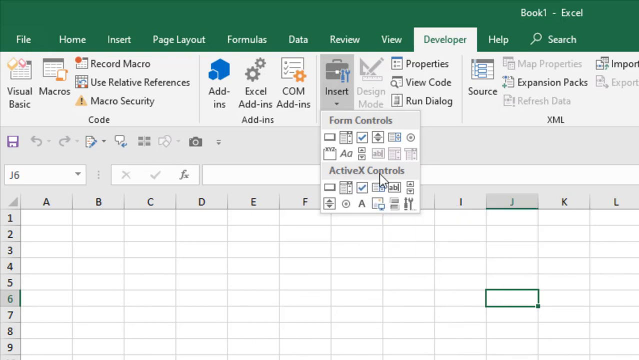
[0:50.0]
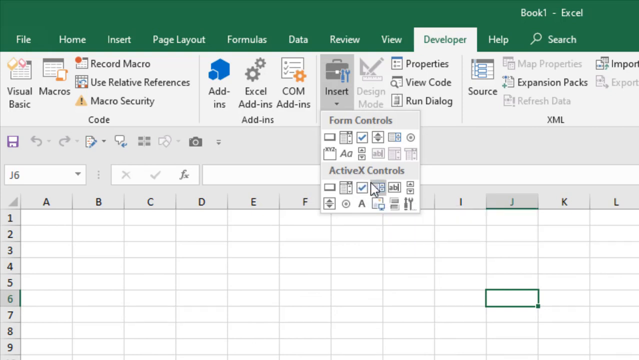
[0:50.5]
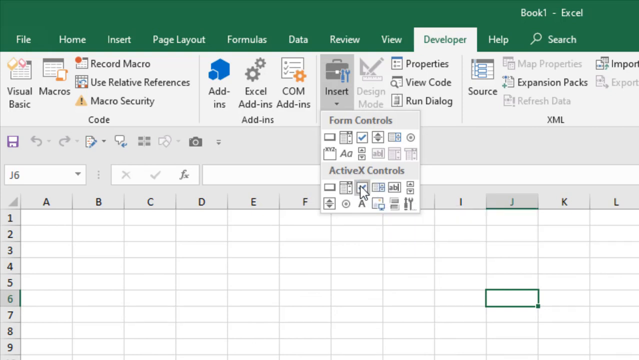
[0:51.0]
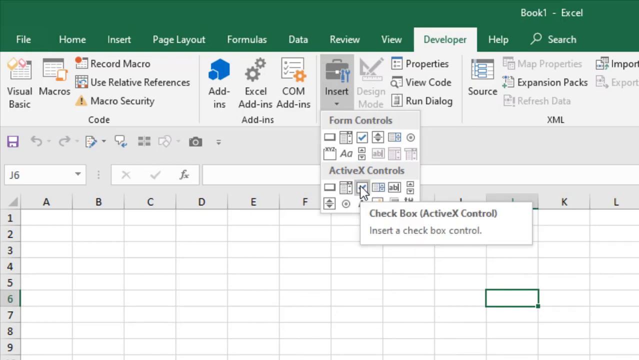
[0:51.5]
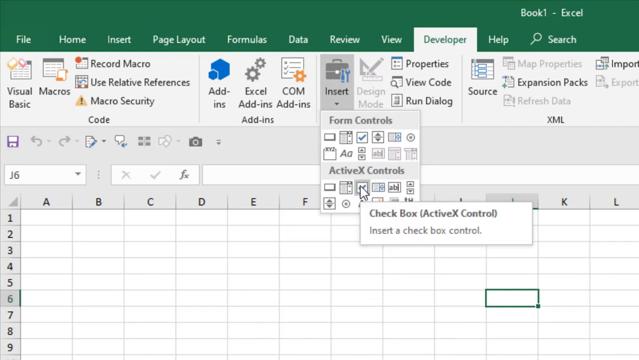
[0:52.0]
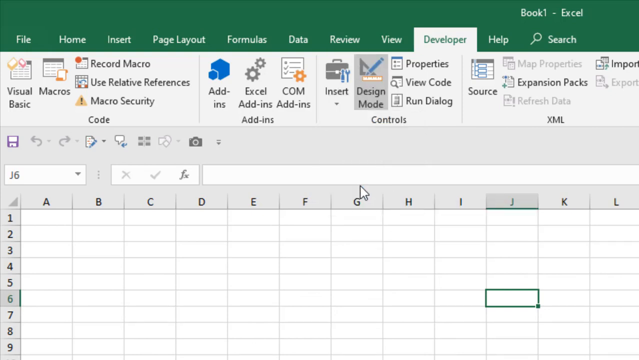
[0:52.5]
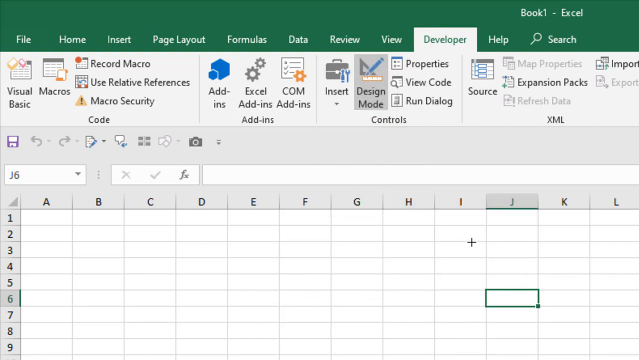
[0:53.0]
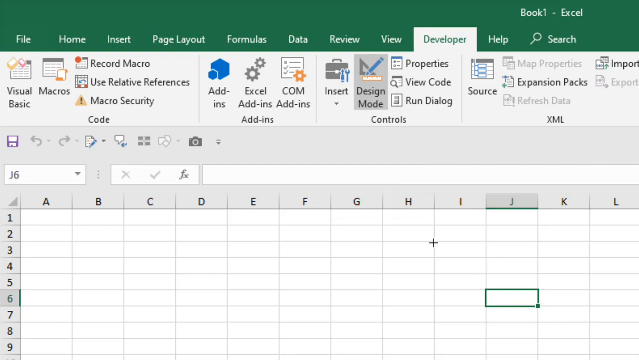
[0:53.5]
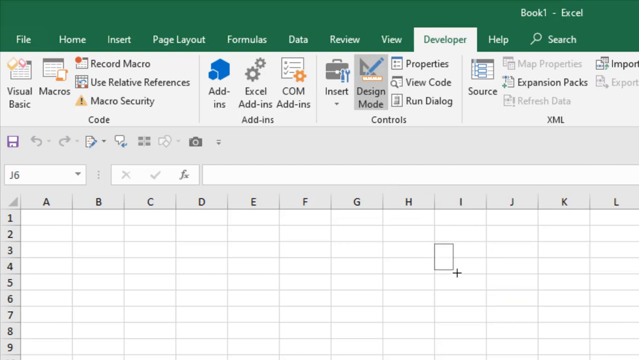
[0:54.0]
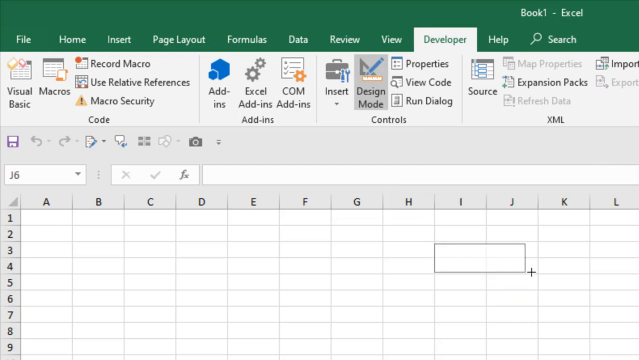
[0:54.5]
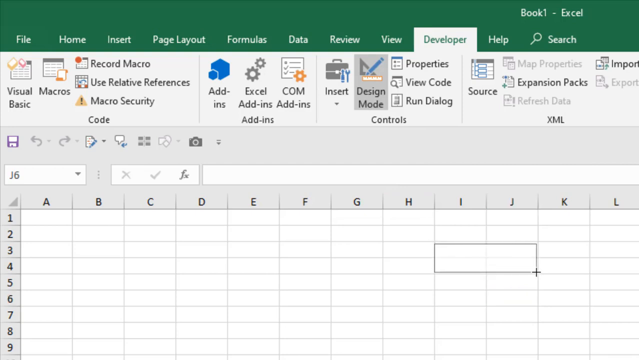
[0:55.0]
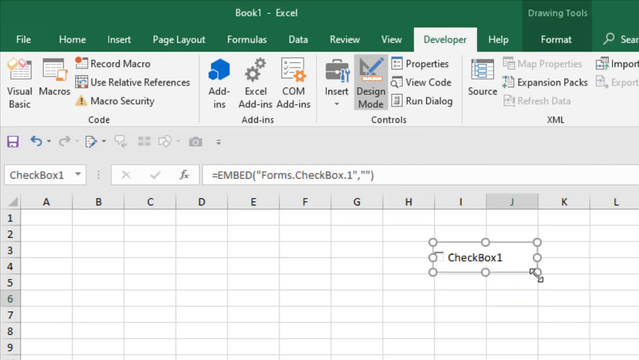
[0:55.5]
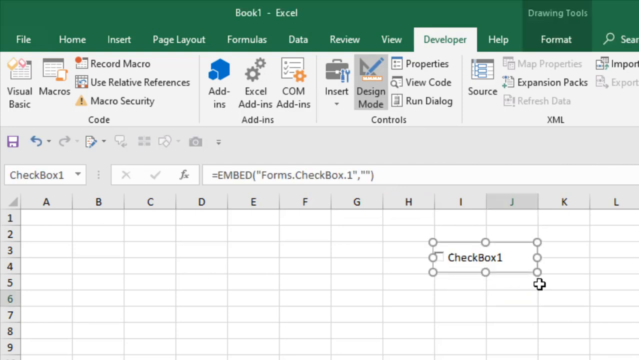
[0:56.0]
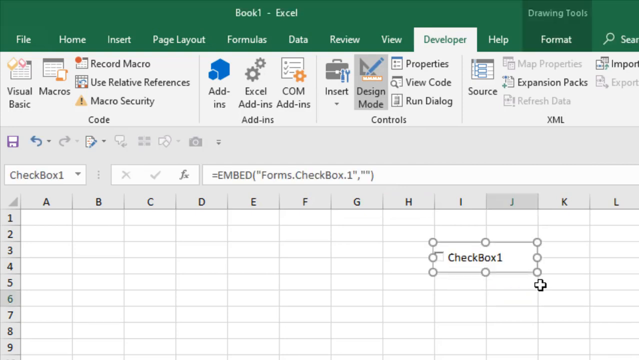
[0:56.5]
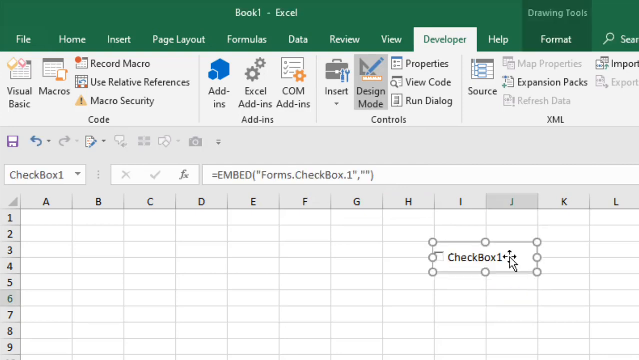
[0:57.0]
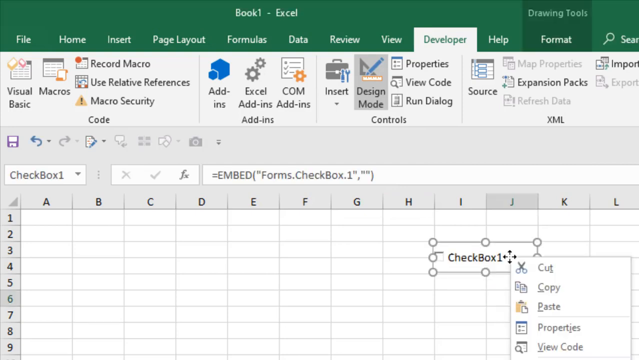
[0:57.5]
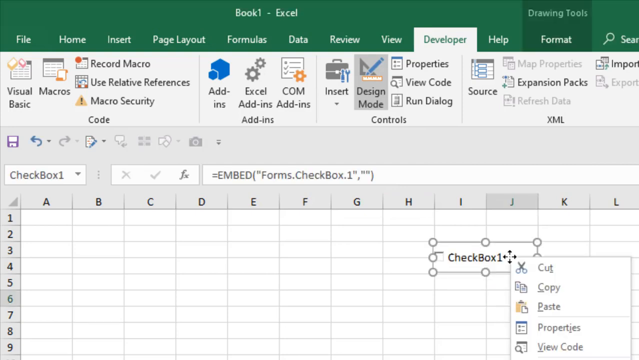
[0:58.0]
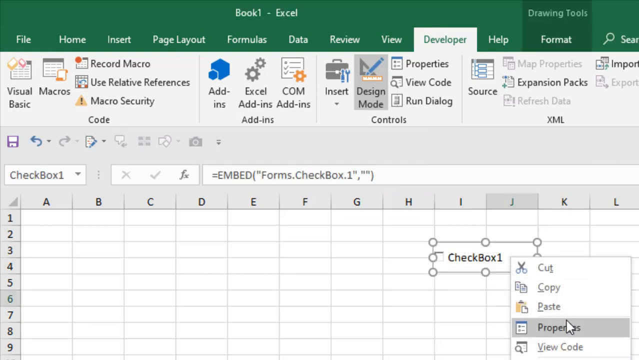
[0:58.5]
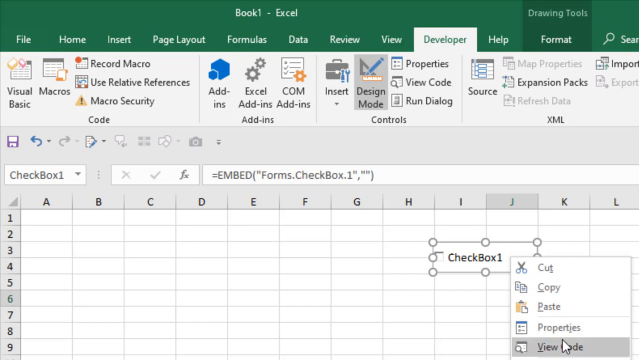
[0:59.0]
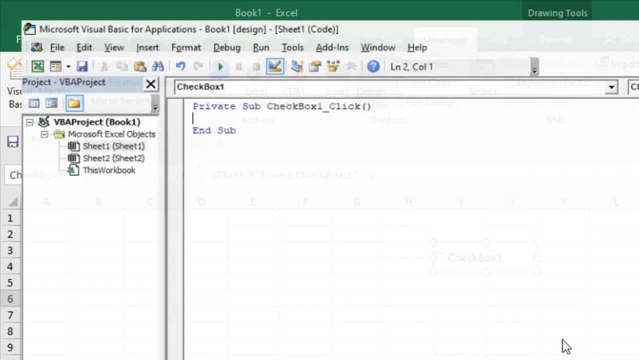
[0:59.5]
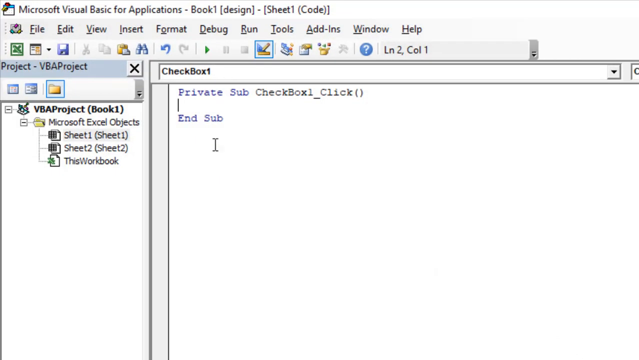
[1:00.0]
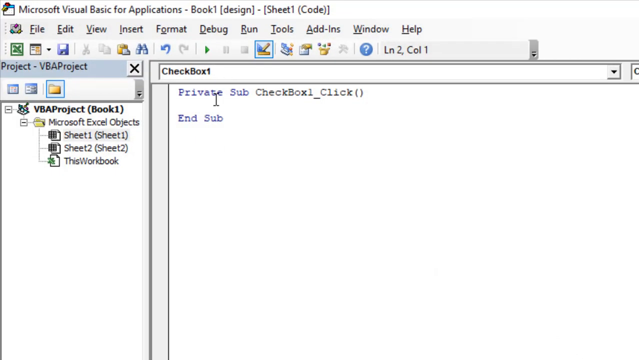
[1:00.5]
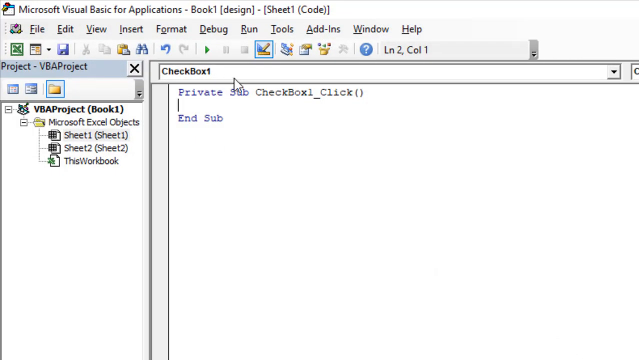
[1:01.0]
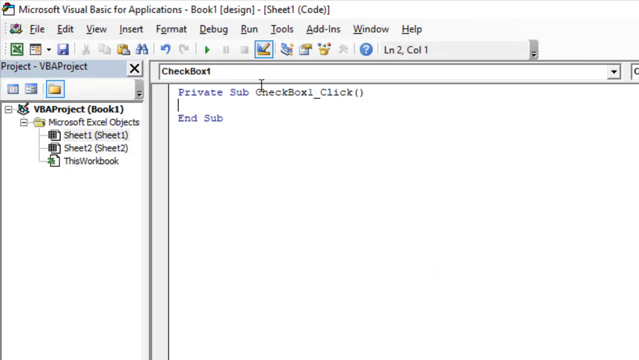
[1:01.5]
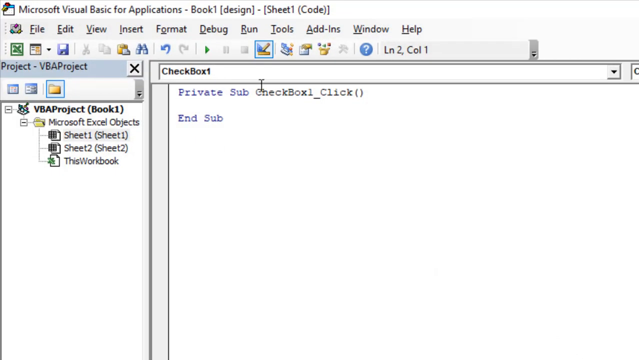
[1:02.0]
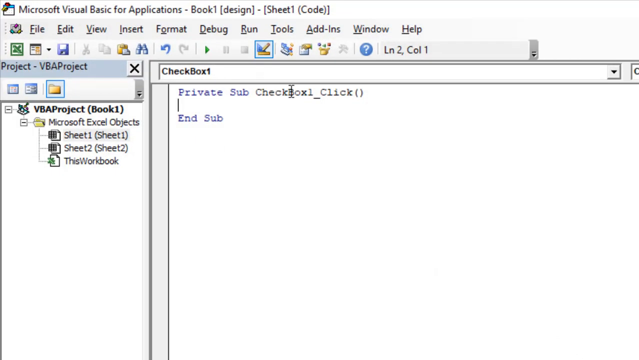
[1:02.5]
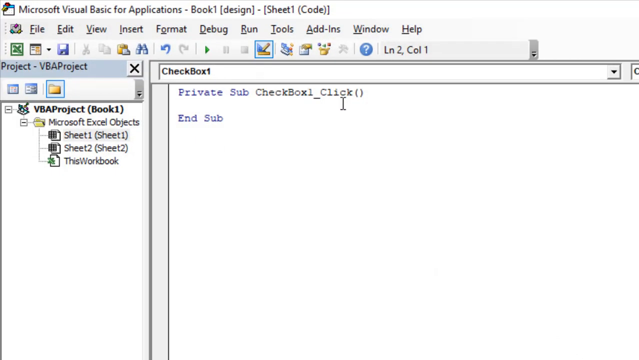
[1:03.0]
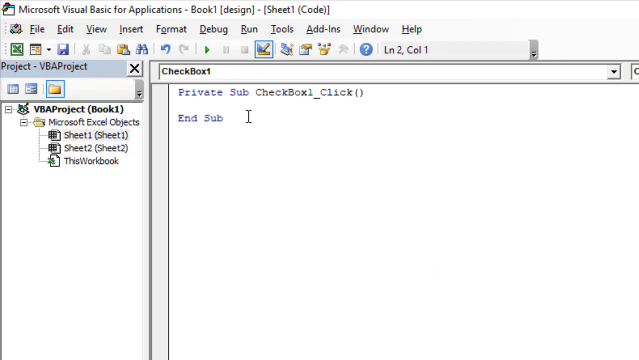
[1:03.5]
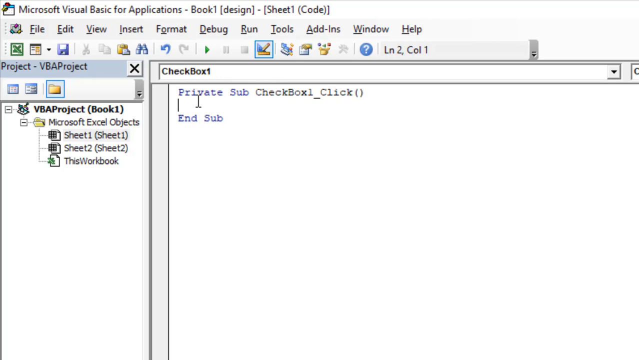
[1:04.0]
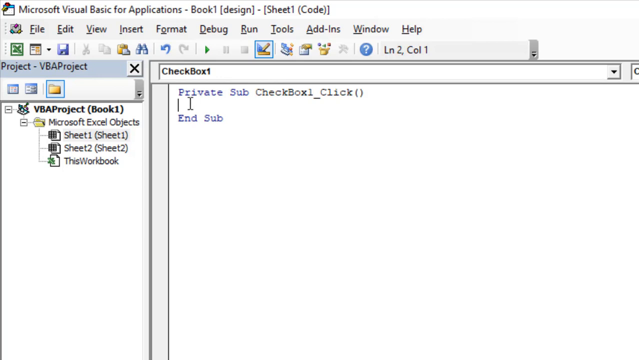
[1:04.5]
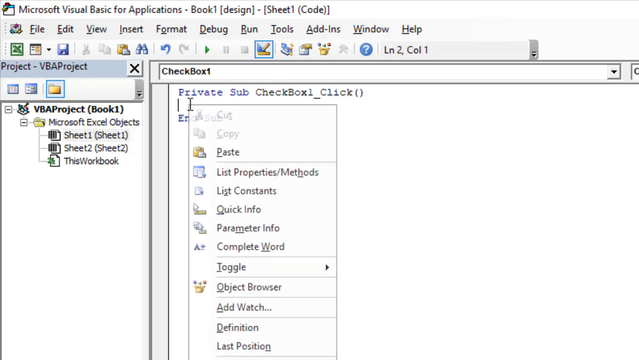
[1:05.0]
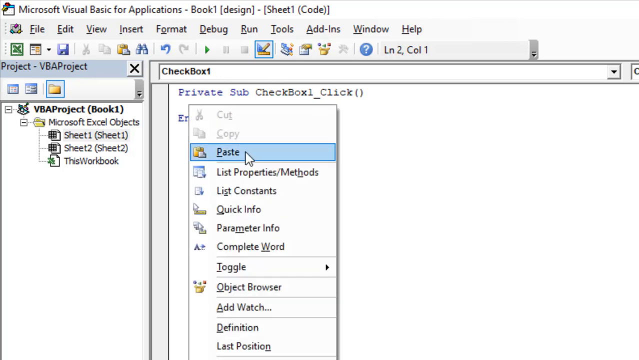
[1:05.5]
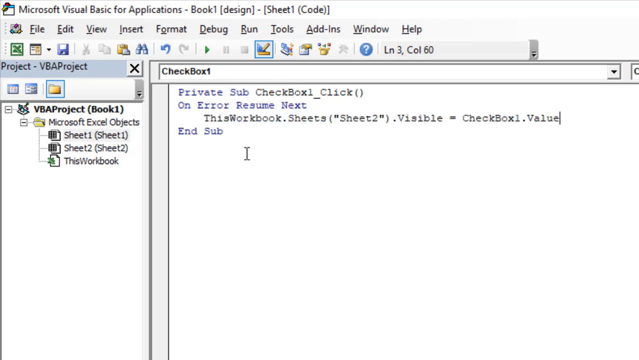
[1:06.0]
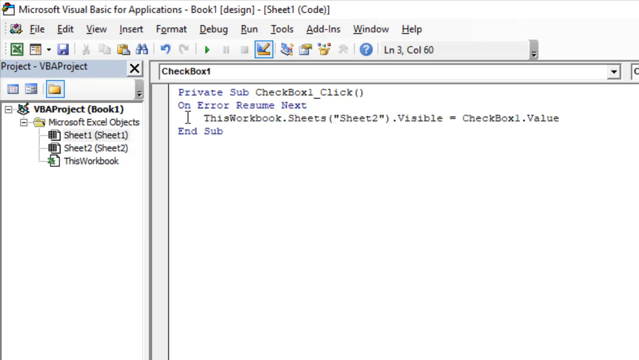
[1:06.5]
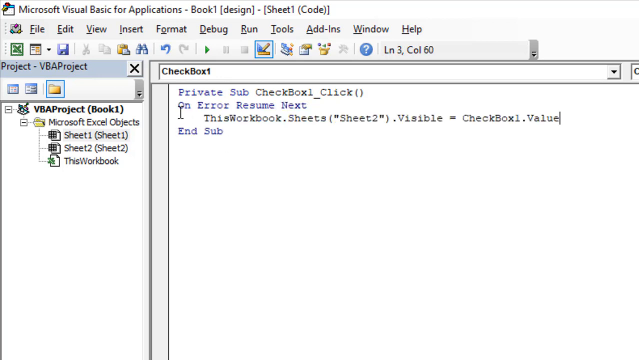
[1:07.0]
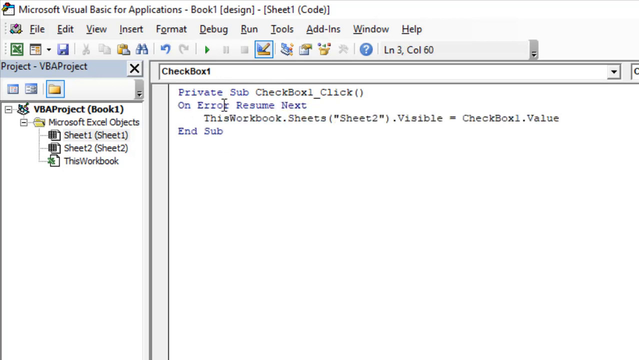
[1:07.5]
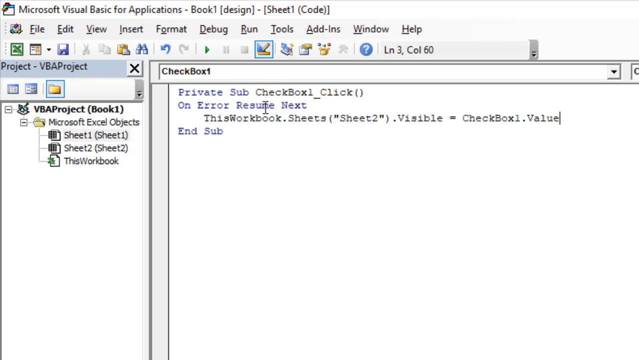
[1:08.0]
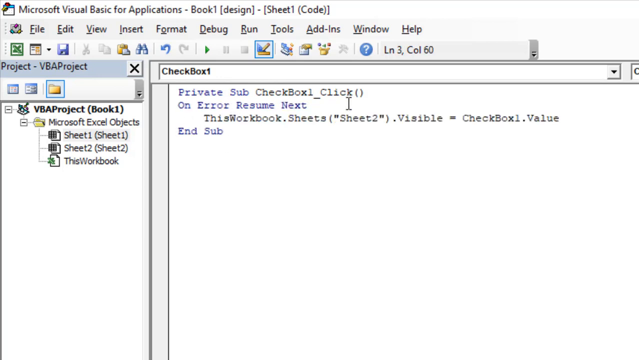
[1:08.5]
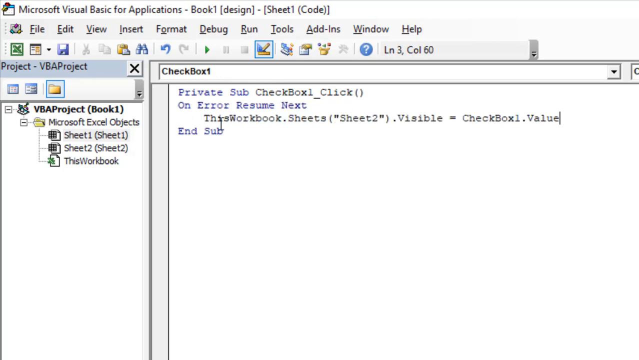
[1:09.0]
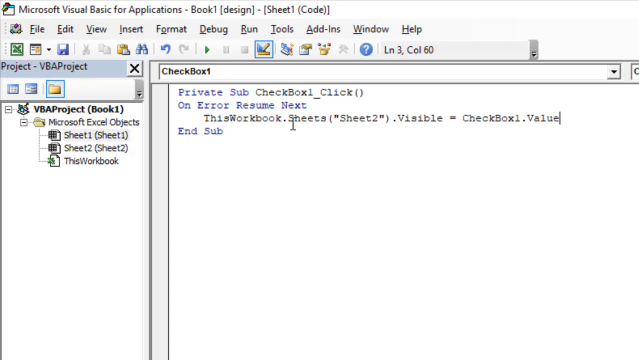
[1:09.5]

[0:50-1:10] The green strip at the top of the computer screen holds the words "File," "Home," "Insert," "Page Layout," "Formula," "Data," "Review," "View," "Developer," "Help" and "Search," from left to right, and above "Search" it says "Book 1-Excel." Beneath those words are many other small tabs and words that can be clicked. The "Insert" tab has been pushed and is dark gray, and below it a drop-down shows a section labeled "Form Controls" with various buttons, and beneath that a section labeled "ActiveX Controls" with more buttons. He pushes one of those buttons, then brings the mouse down to row two and the line between columns H and I, clicks there, and moves the mouse to create a square with "checkbox one" in its middle.